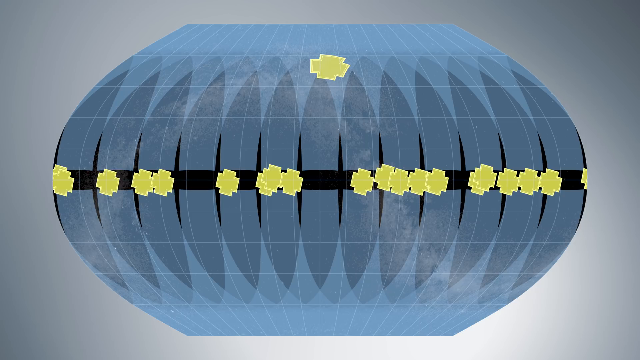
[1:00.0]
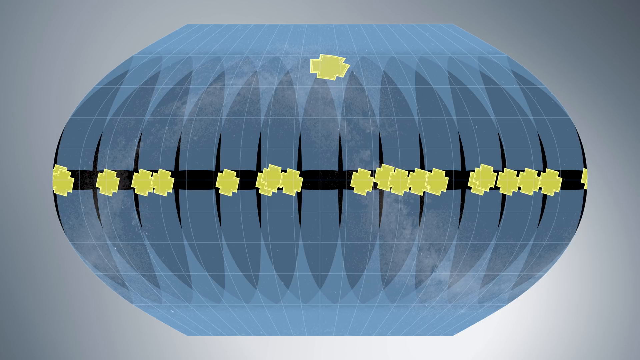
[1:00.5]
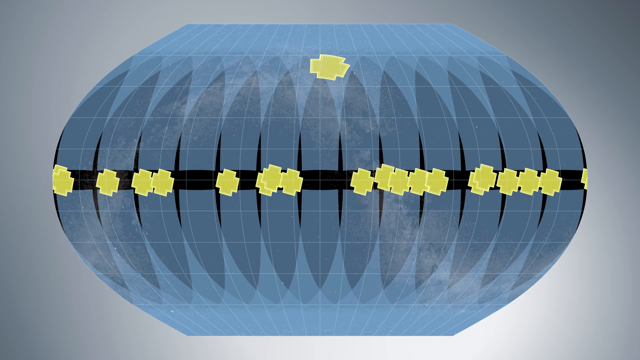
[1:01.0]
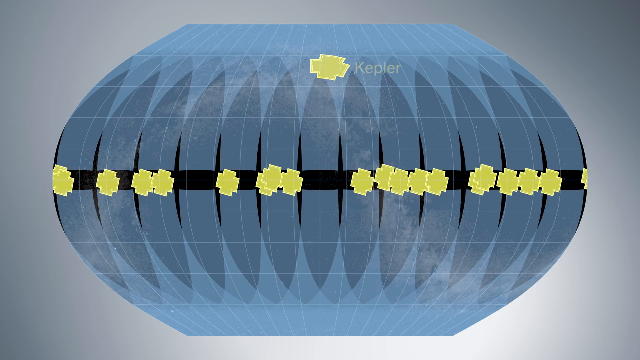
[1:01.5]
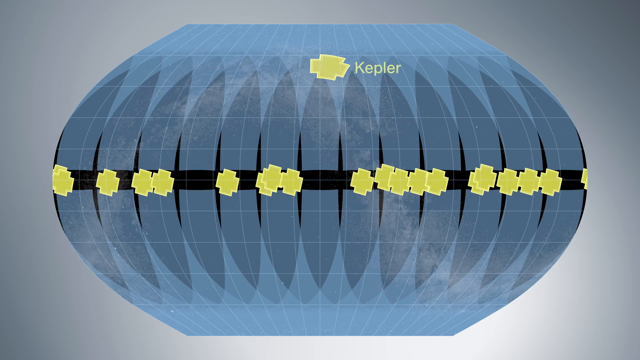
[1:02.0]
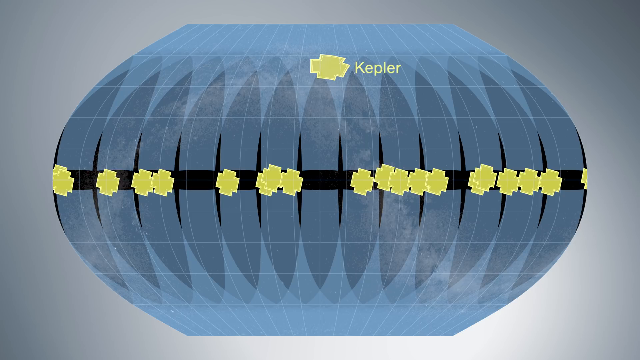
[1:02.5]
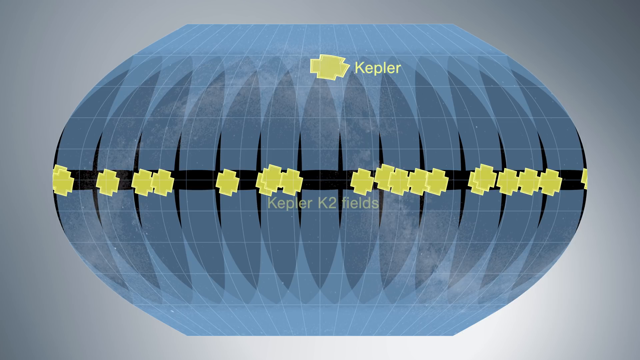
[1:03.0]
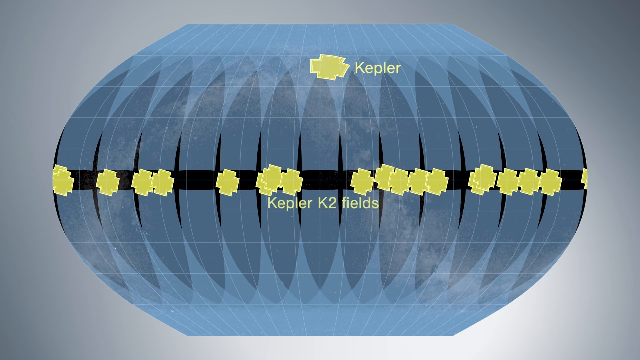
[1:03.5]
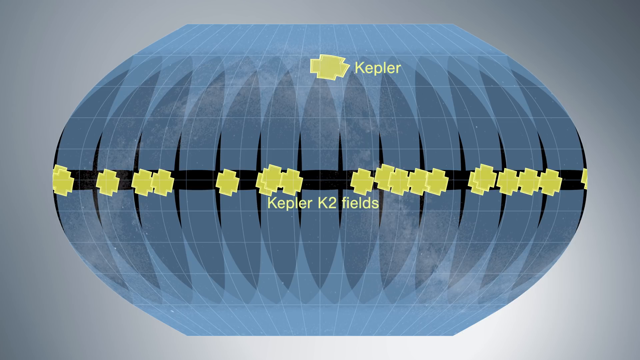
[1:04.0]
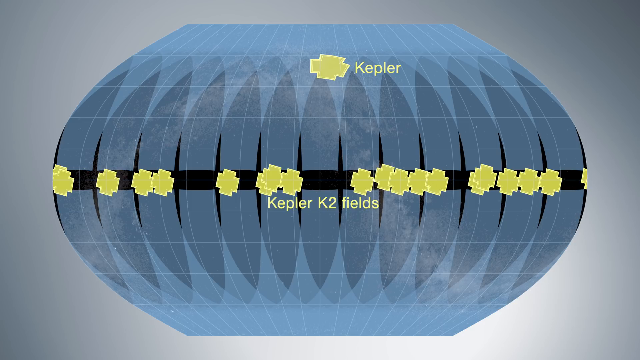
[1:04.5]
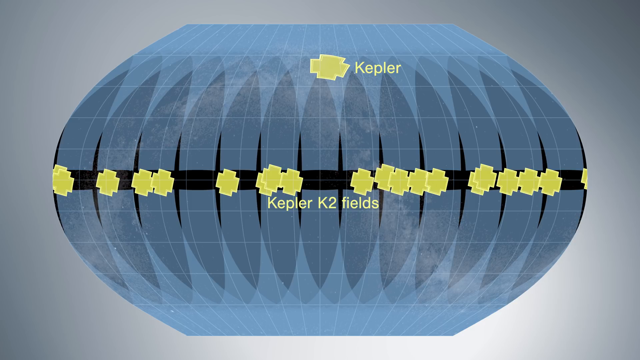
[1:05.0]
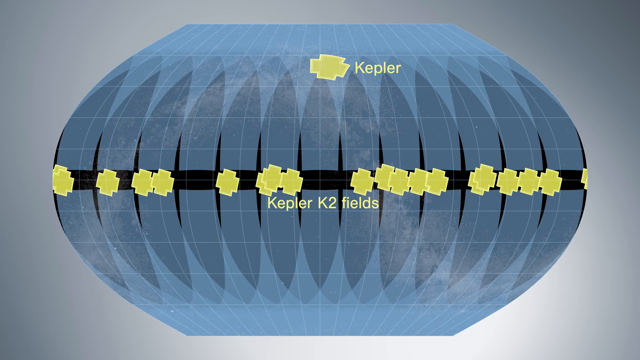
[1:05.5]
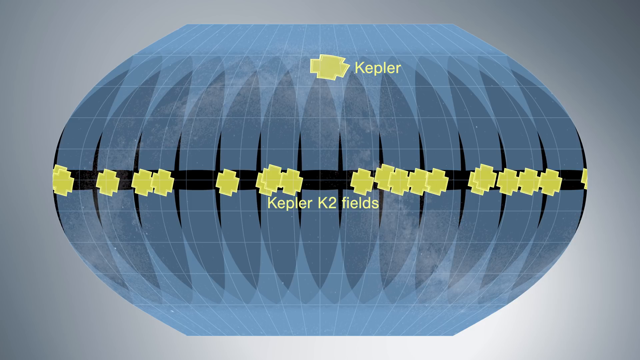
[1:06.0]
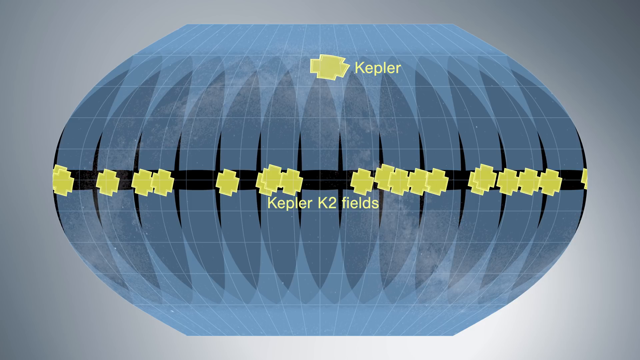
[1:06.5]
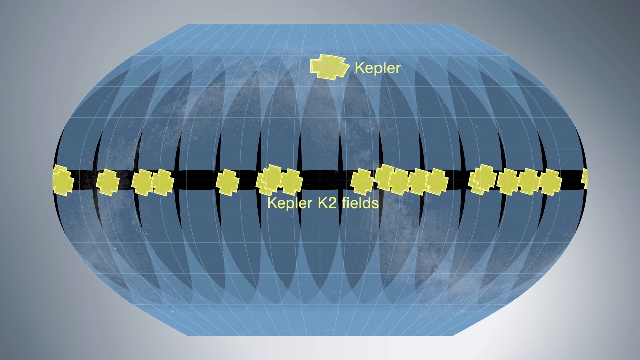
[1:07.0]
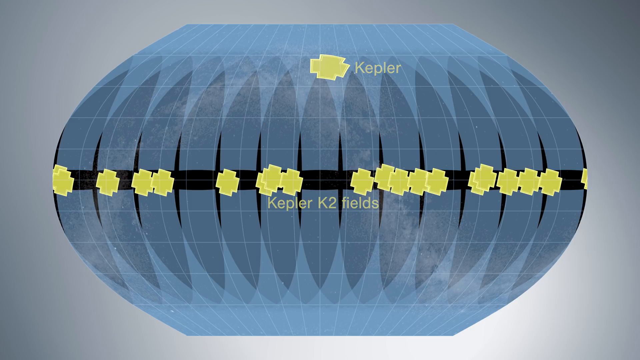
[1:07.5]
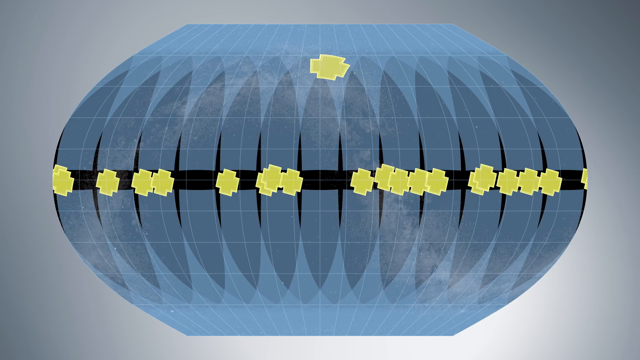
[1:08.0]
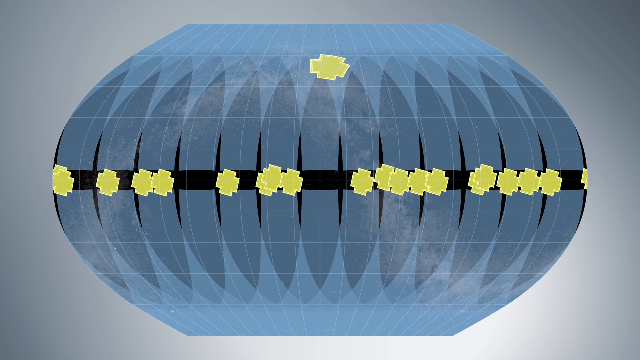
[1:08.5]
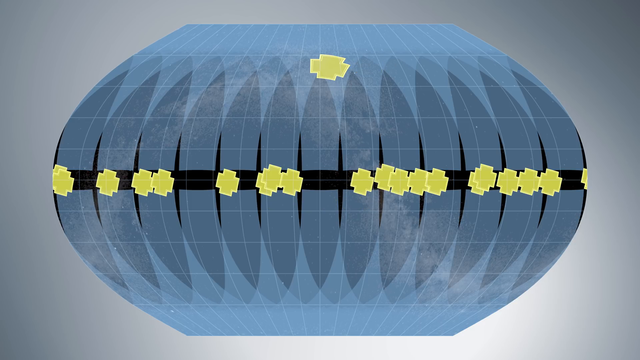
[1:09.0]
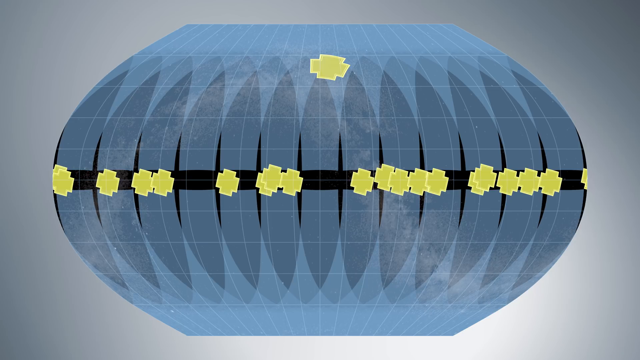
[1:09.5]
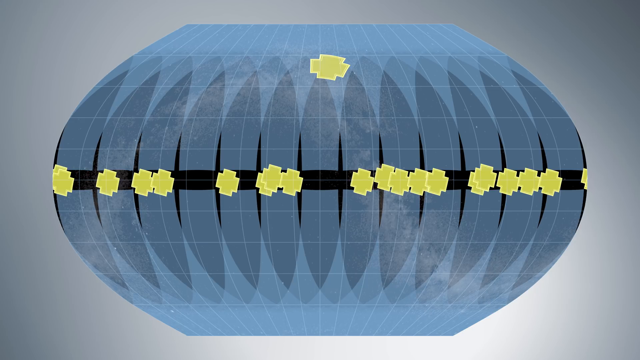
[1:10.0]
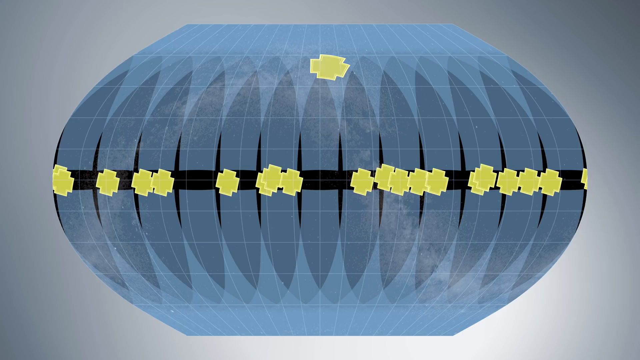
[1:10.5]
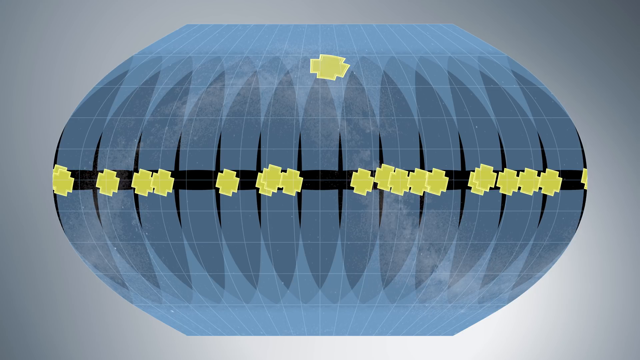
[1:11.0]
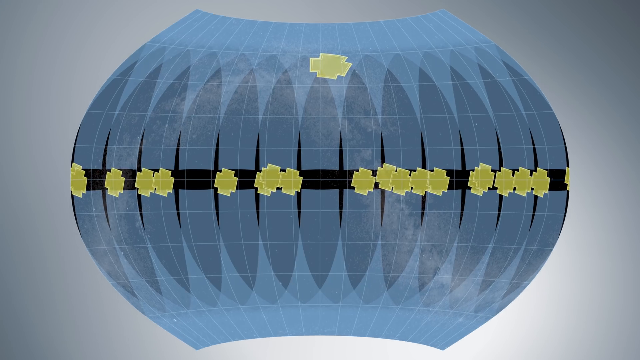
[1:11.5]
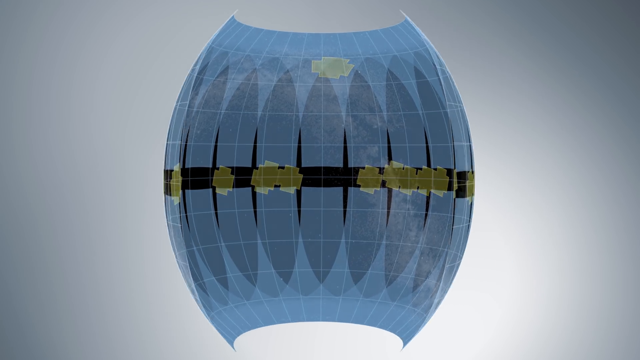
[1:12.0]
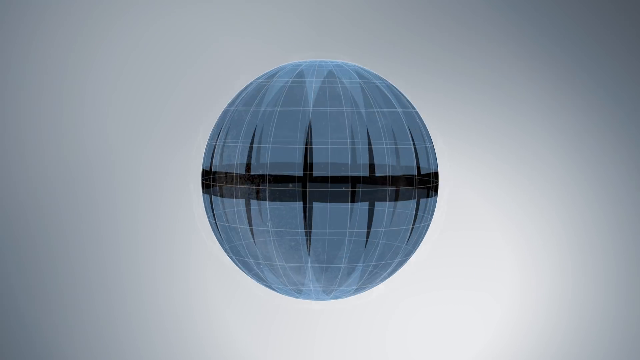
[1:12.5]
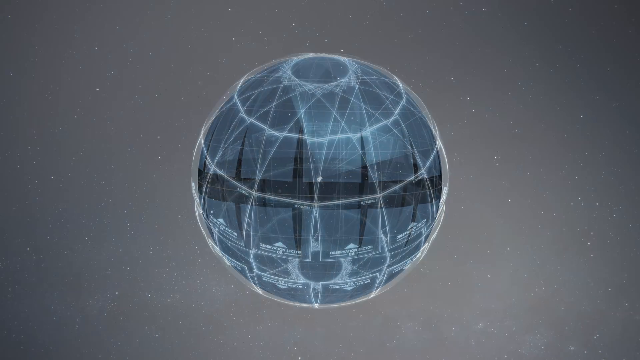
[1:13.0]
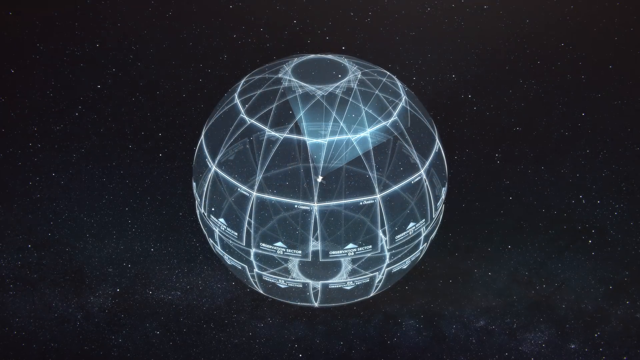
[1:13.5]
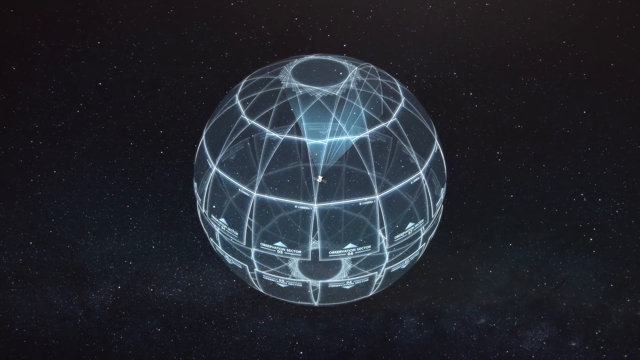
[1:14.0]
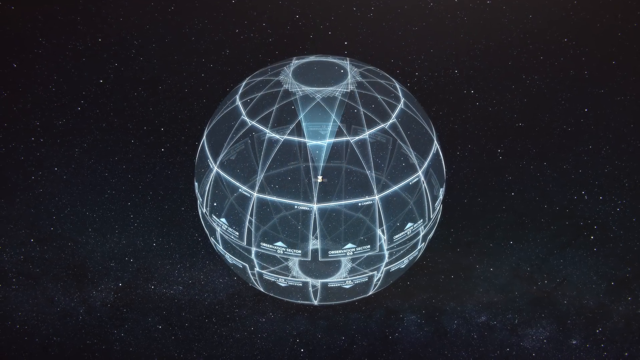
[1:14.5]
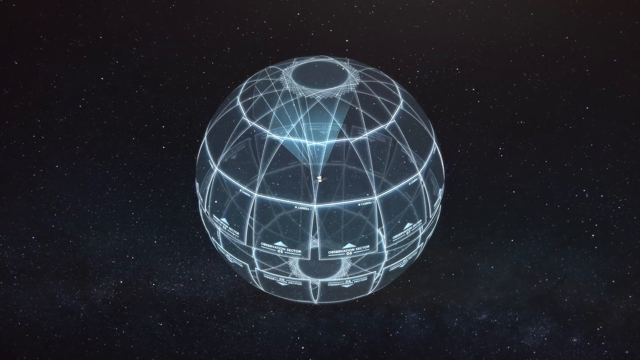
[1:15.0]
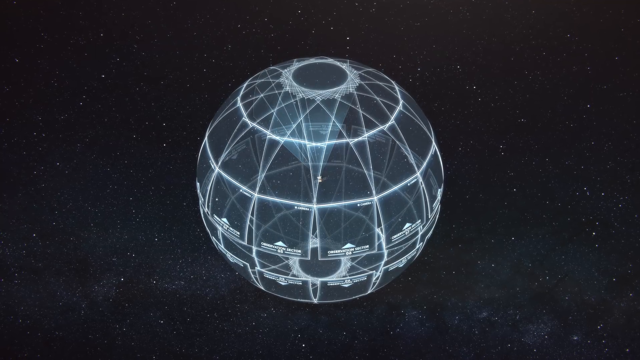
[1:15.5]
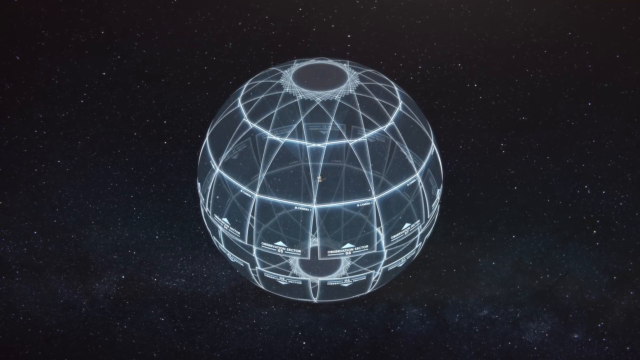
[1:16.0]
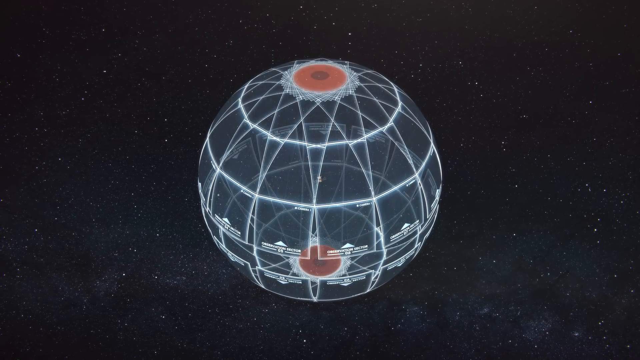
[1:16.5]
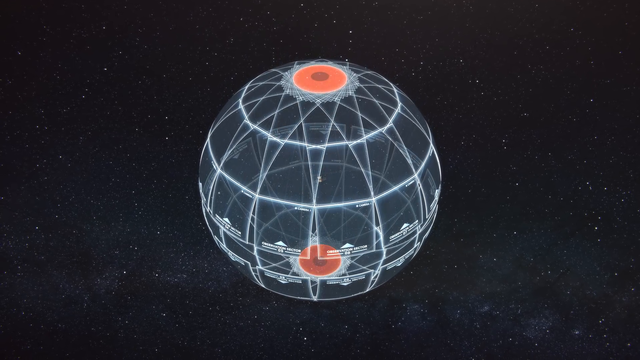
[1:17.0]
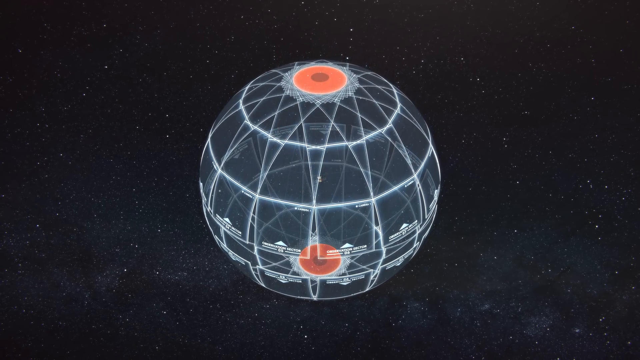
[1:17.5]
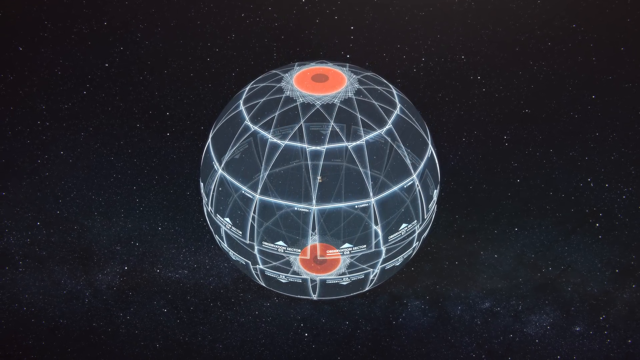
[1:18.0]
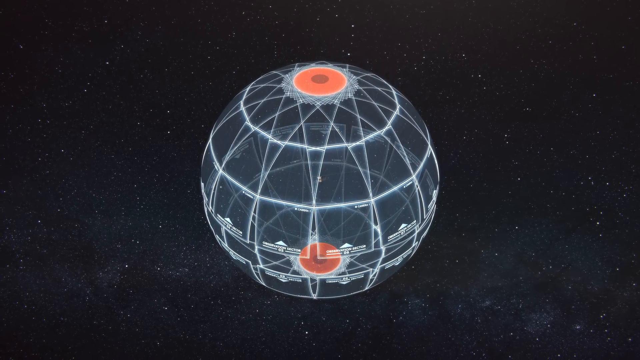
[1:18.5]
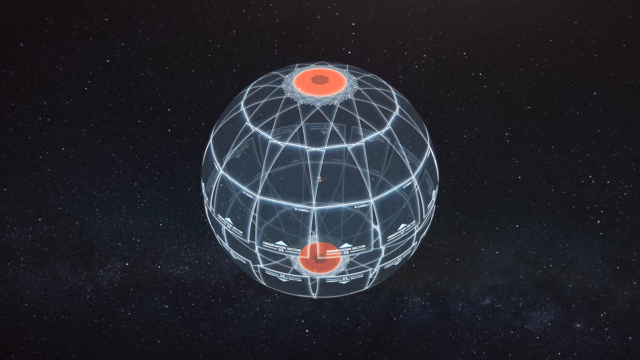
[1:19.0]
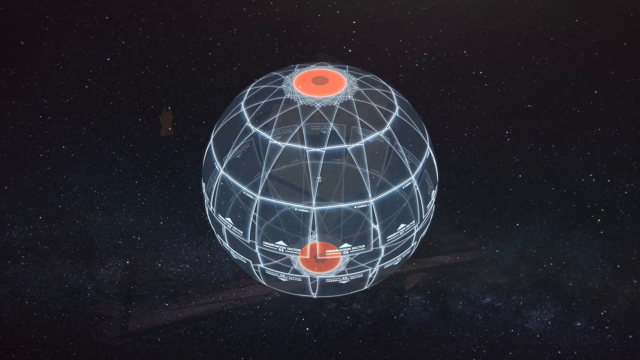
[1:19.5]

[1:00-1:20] A 2D symmetrical figure is shown; it looks like a 3D circle that has been cut open vertically and spread out. Its segments interlock, and its colours are pale grey and blue. A blue horizontal strip runs through the middle, with gold cross-shaped objects across it, and below the strip gold text reads "Kepler K2 fields". The animation then closes up again, the sphere forming a 3D globe shape. What looks like magnetic fields run crisscross around the body of the globe from top to bottom. The top and bottom of the globe then change and light up in orange.